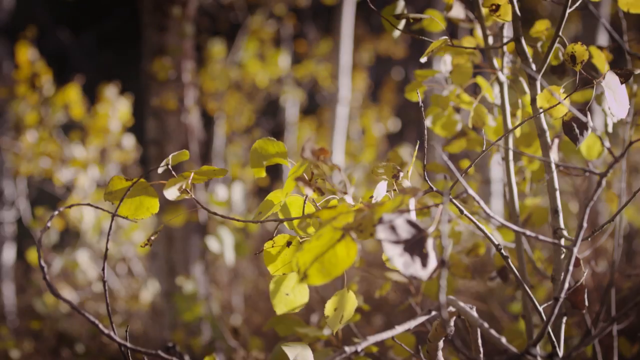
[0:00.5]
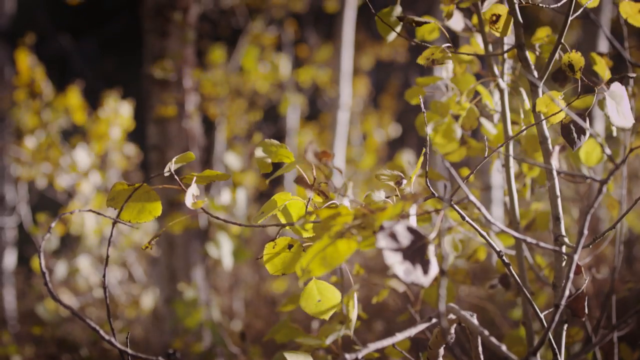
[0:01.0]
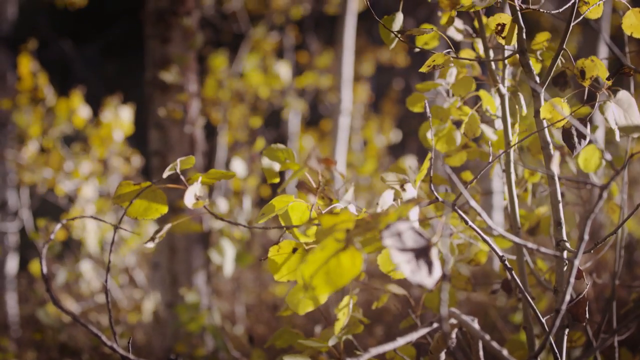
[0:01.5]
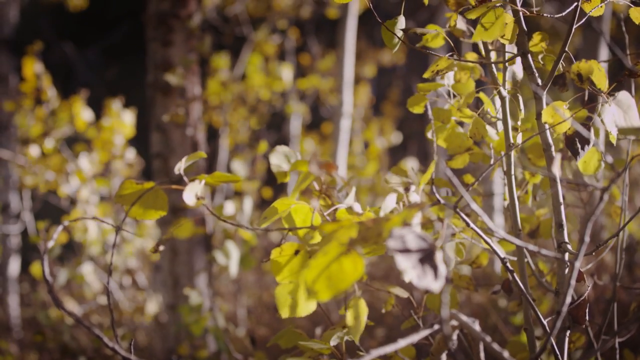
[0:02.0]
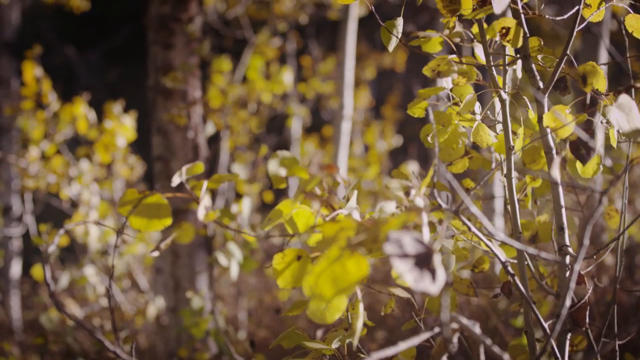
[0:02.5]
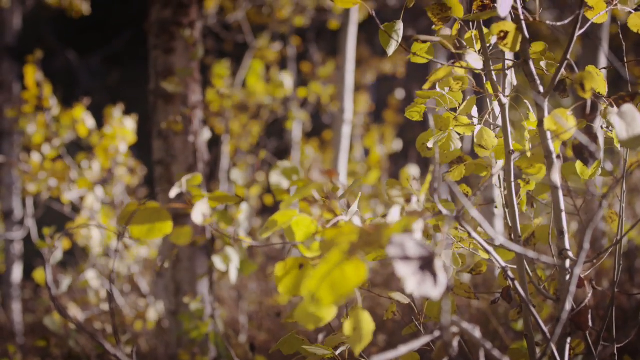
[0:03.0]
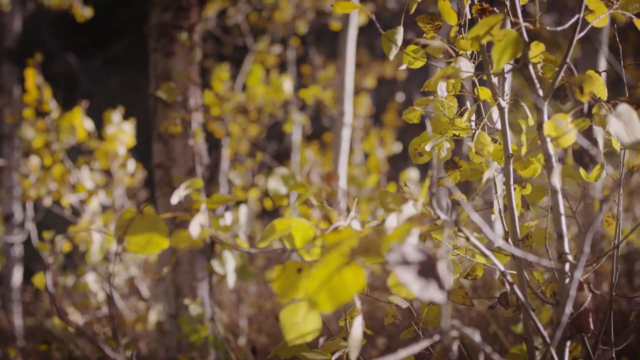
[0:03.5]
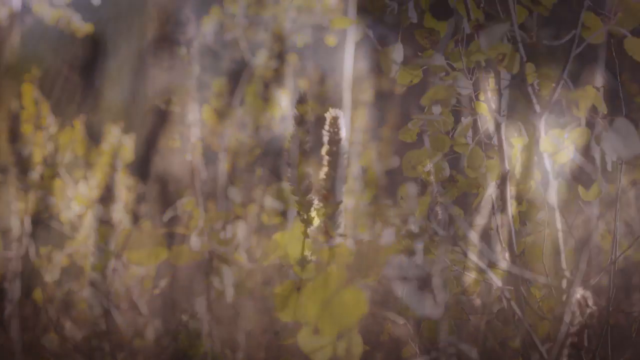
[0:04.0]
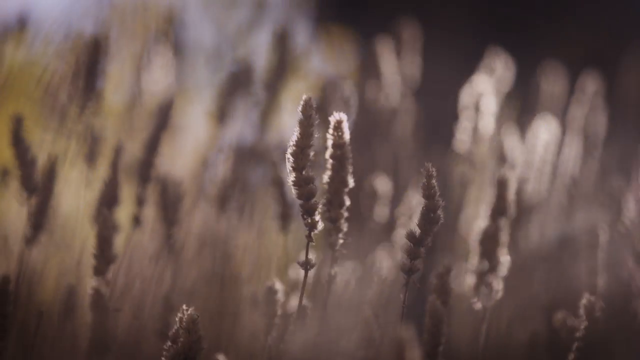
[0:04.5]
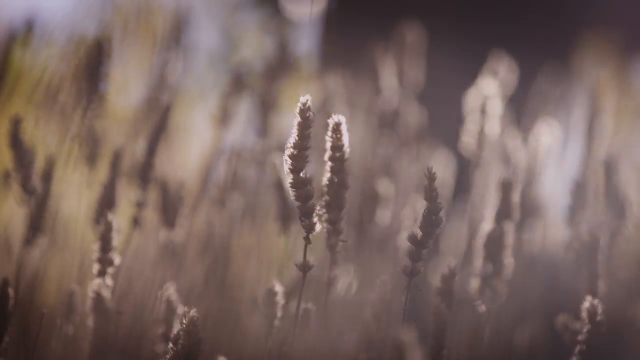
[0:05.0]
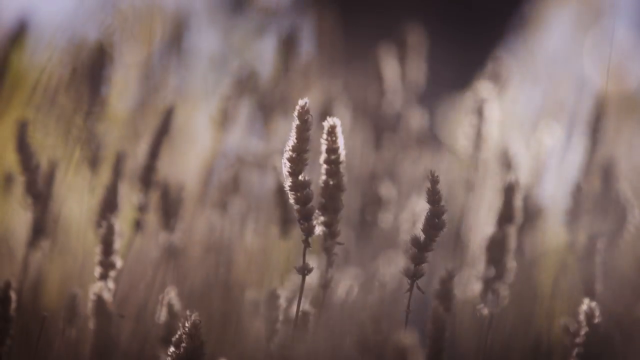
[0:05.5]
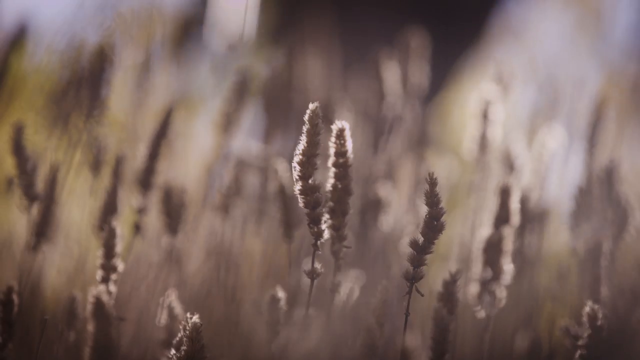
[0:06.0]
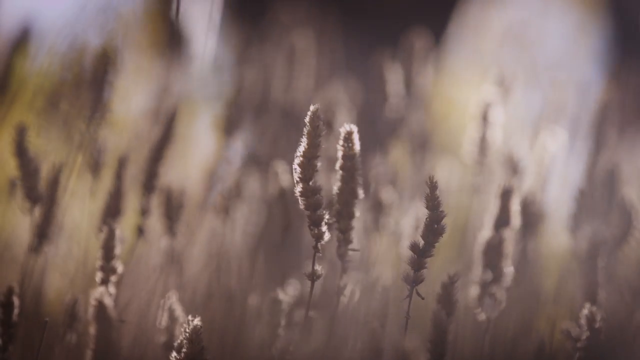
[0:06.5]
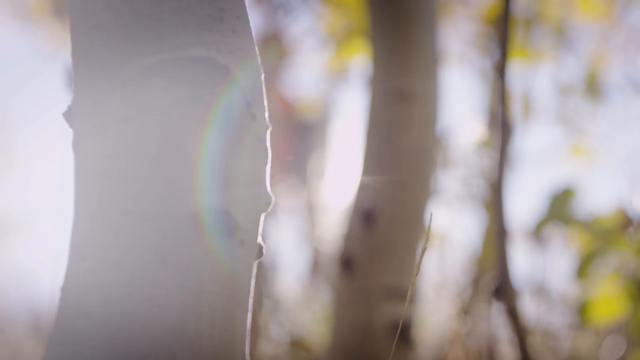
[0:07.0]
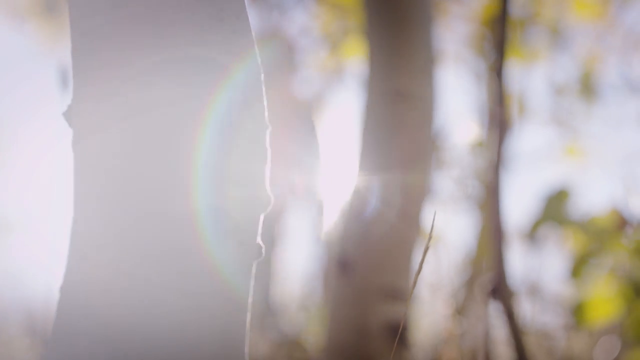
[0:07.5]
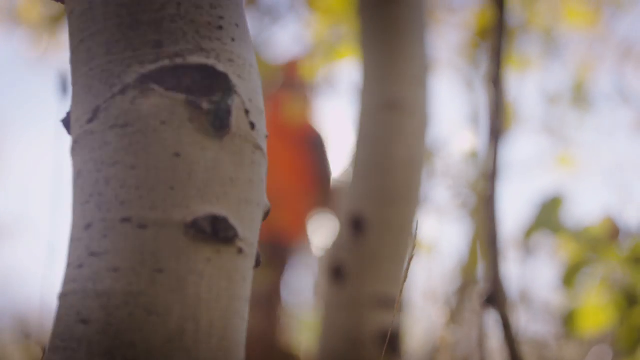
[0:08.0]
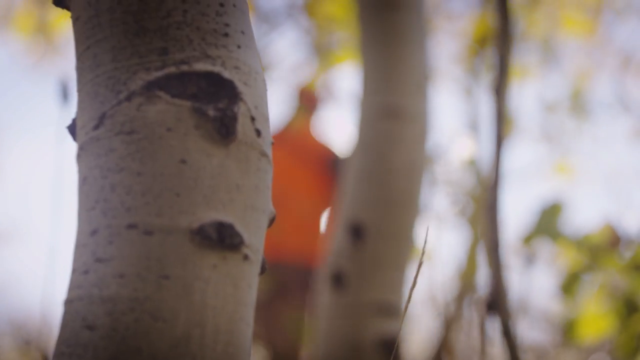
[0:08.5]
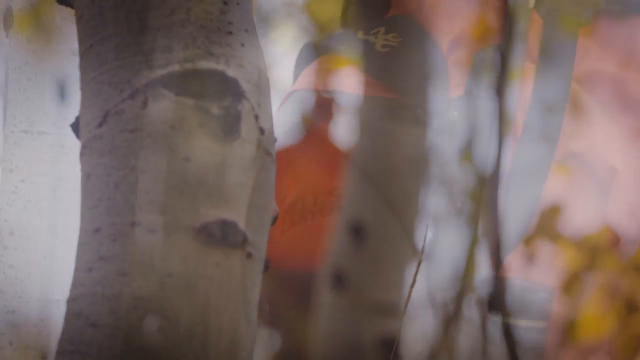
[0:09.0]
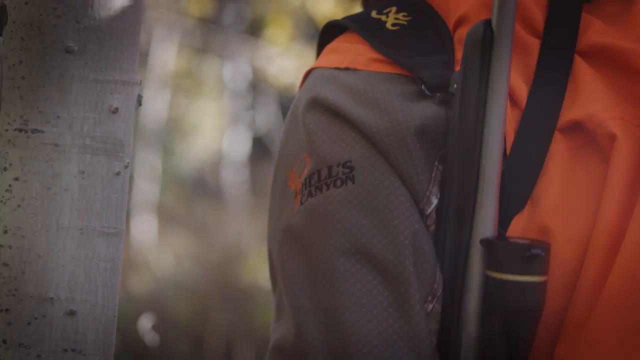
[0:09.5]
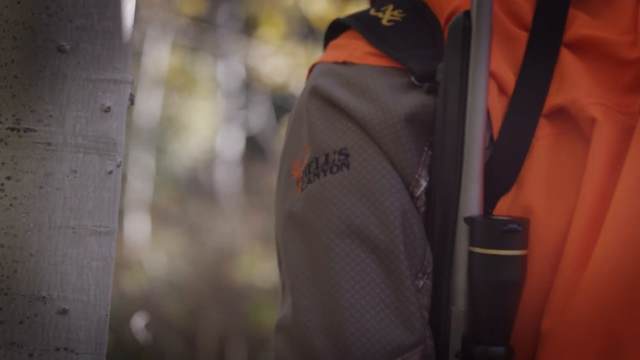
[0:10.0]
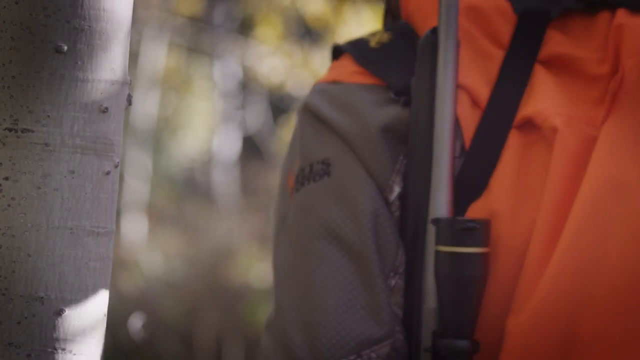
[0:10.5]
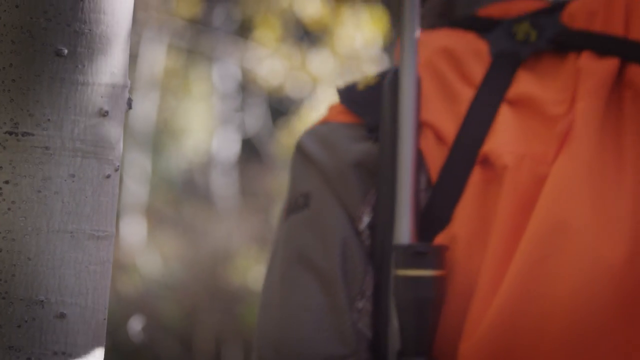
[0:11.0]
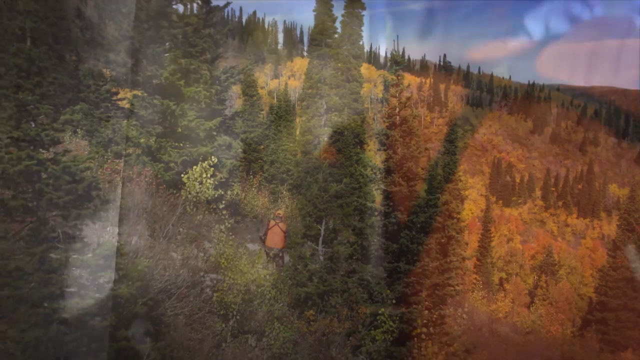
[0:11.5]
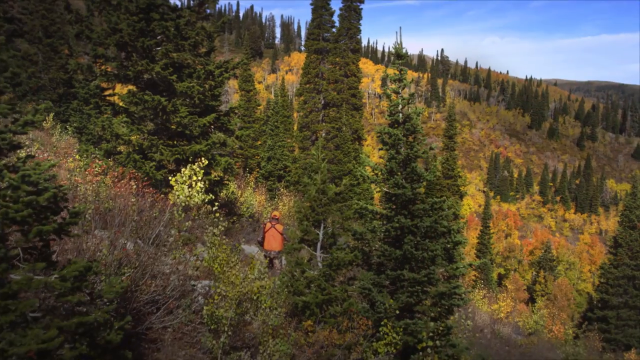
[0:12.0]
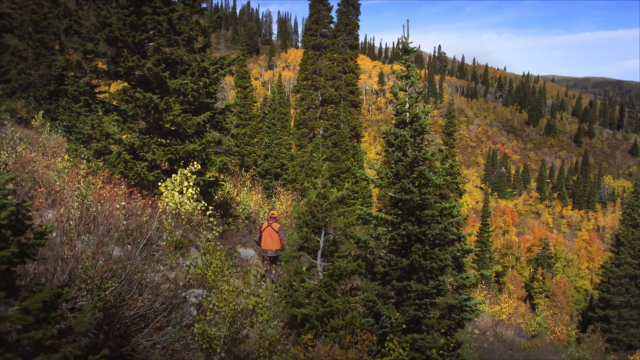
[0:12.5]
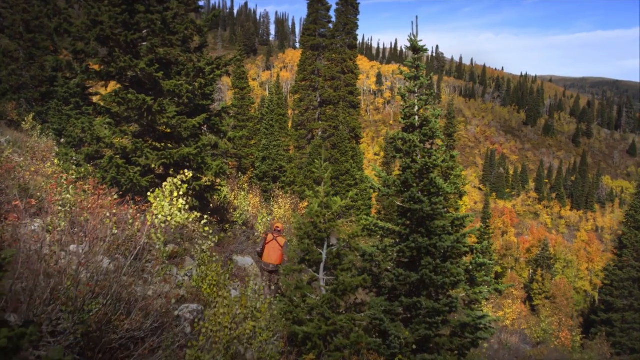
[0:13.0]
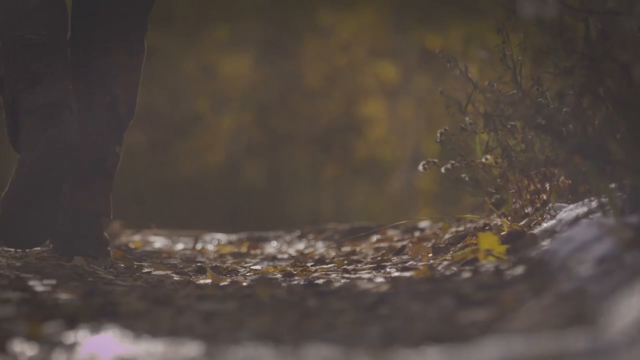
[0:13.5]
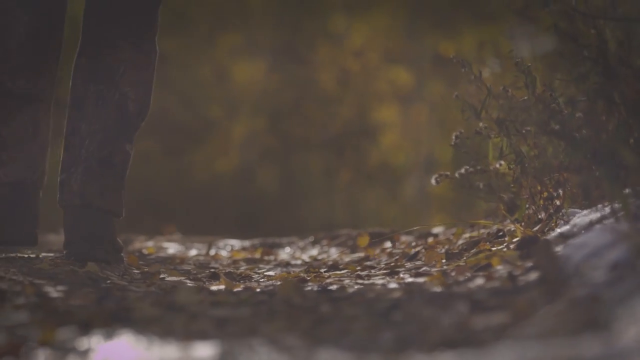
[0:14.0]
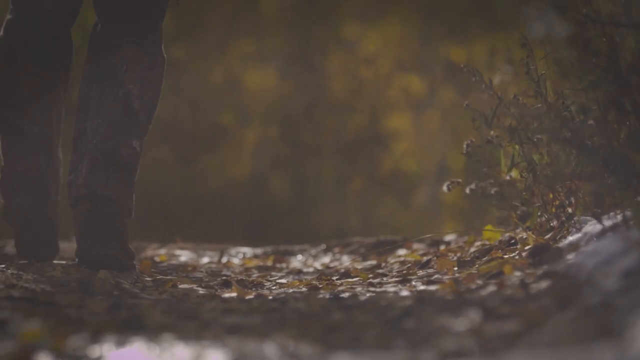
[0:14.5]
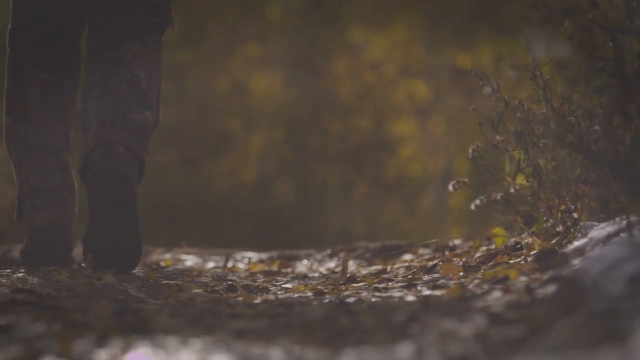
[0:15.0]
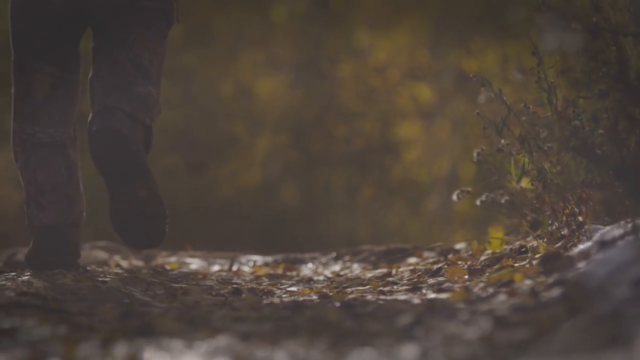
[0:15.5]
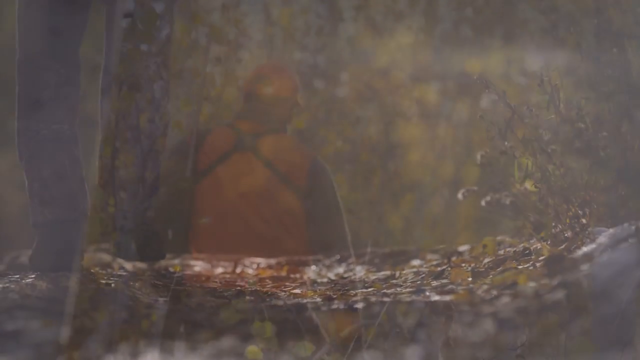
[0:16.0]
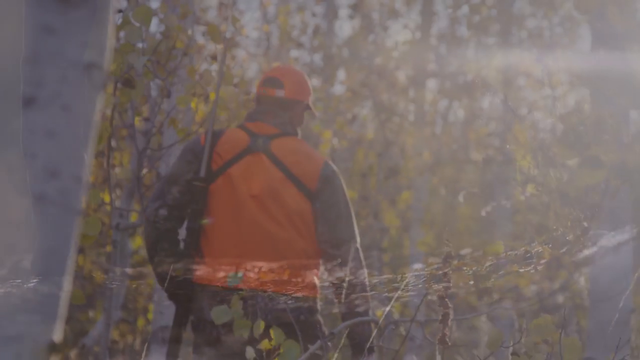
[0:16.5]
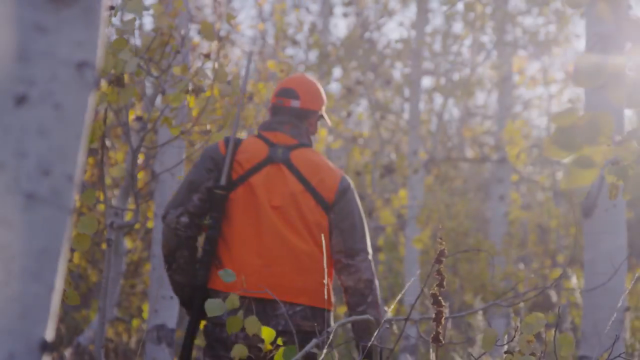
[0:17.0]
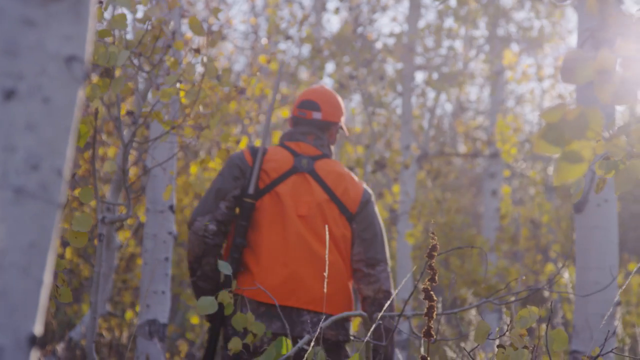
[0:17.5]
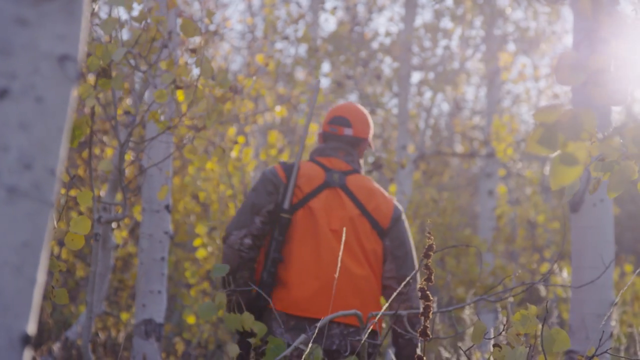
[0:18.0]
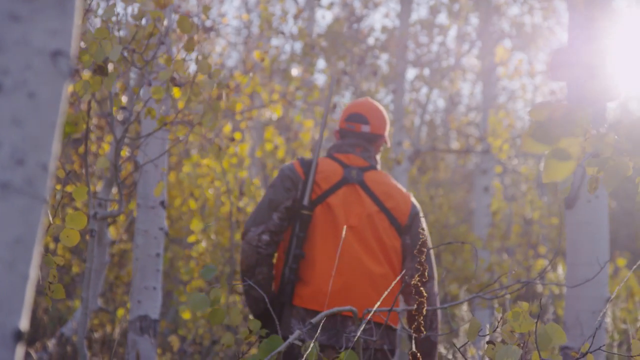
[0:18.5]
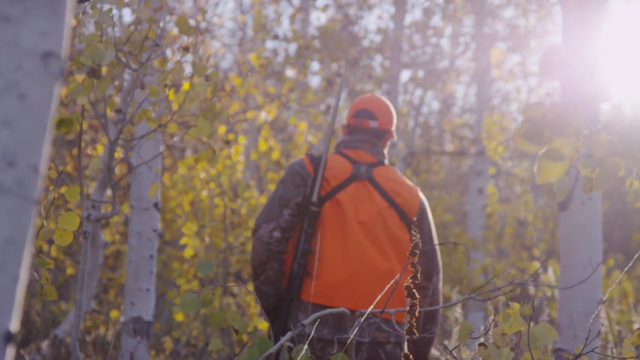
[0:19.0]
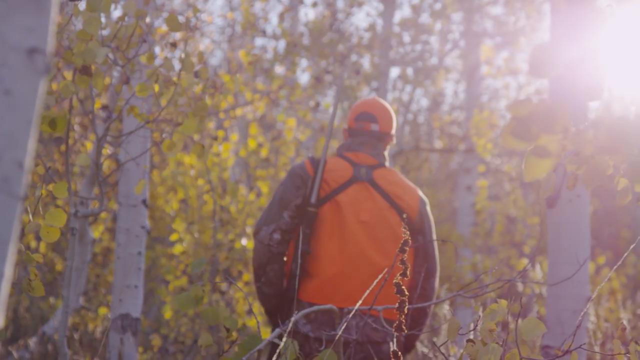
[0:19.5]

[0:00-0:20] Leaves sway in what seems to be a strong wind. There is a field and a tree, and at the bottom of the tree two tree trunks appear, blurred, so the image is hard to make out. What looks like a person's clothes appear at the end of the shot. The camera zooms in on a person wearing orange who walks through nature. The fields have very green trees, with some patches of orange and yellow grass around them. The zoom shows leaves flying and the person in orange clothes walking through the forest. The setting is quiet and calm, with the wind swaying the leaves.